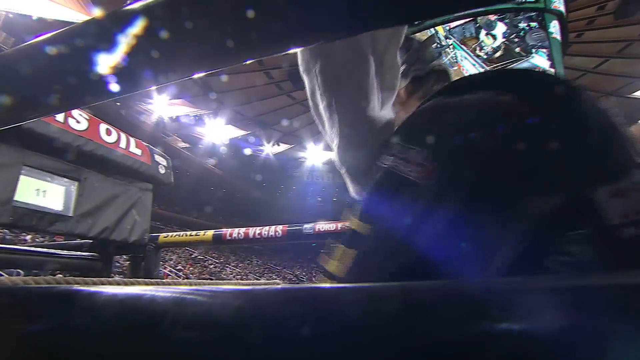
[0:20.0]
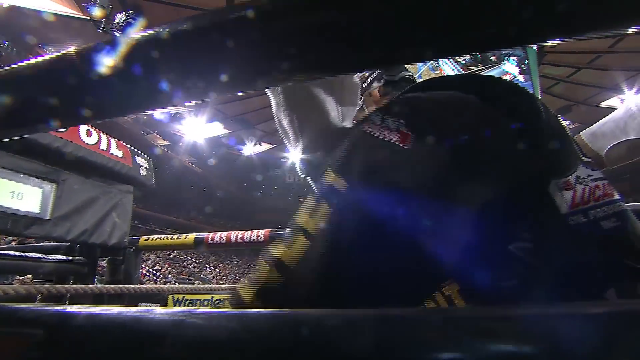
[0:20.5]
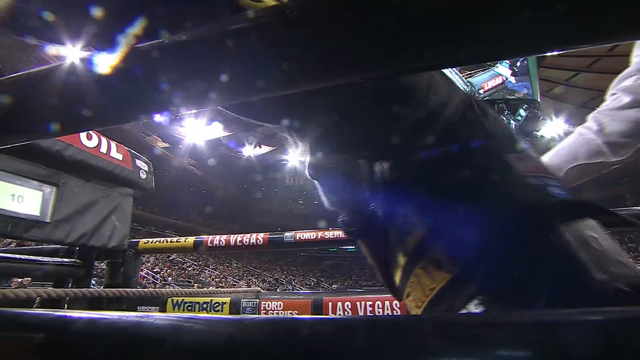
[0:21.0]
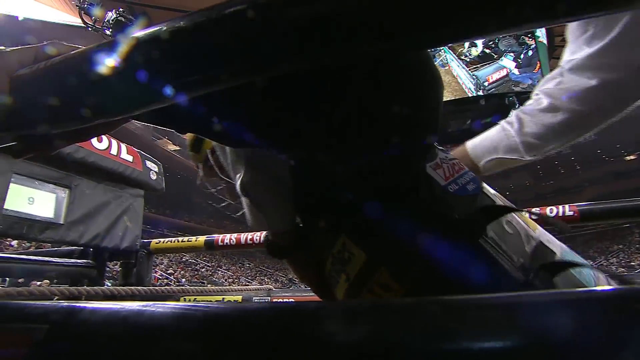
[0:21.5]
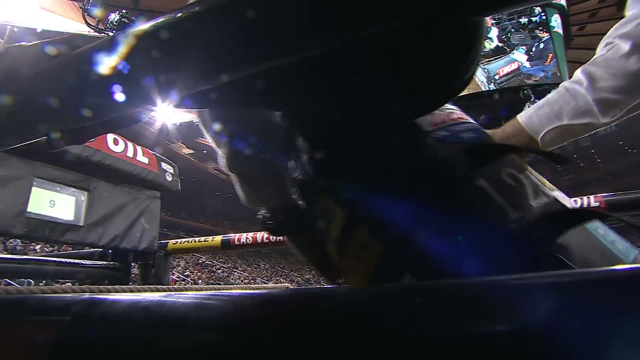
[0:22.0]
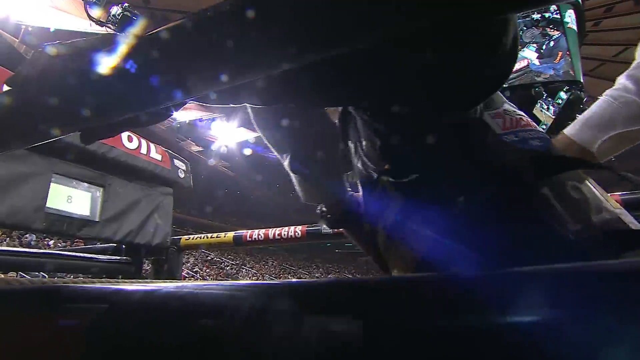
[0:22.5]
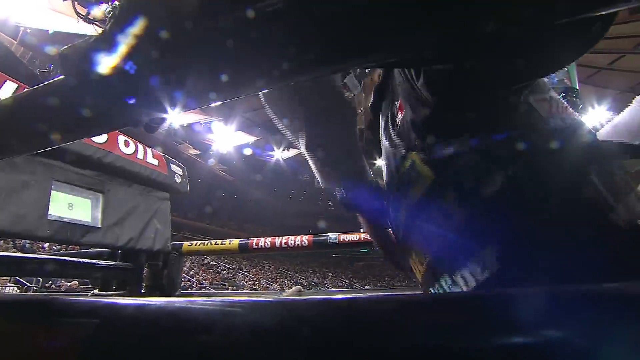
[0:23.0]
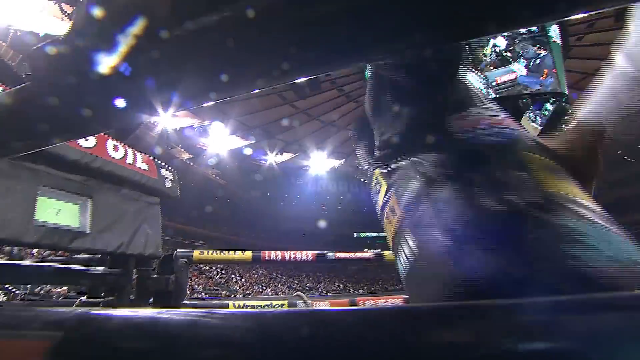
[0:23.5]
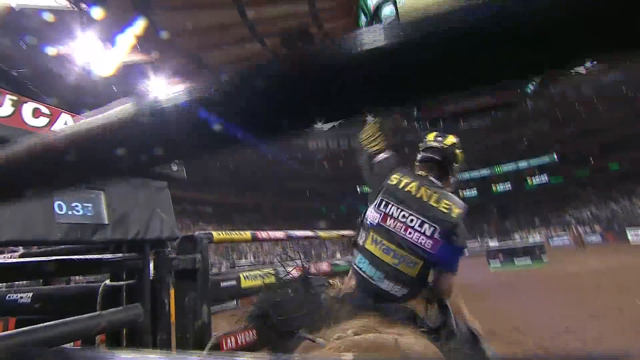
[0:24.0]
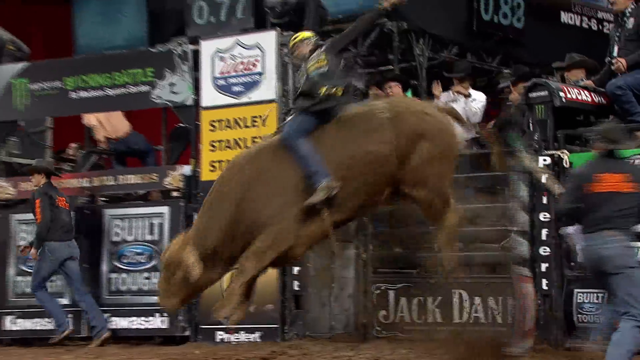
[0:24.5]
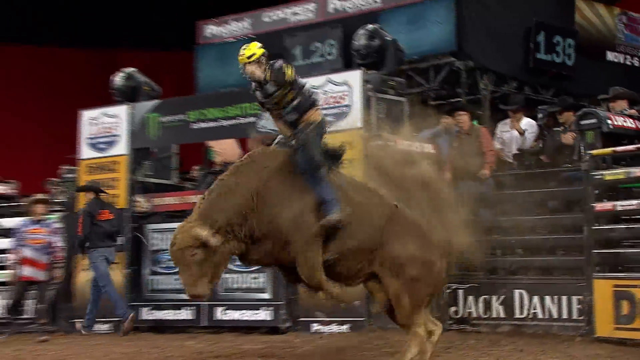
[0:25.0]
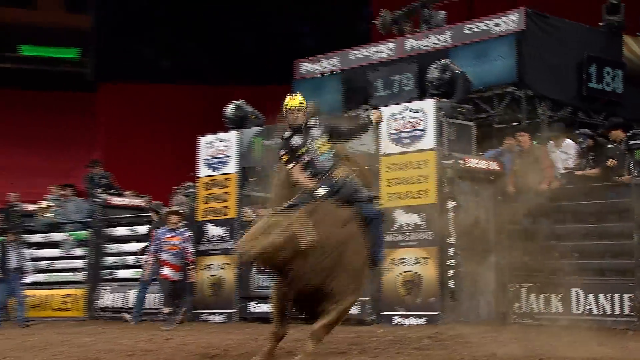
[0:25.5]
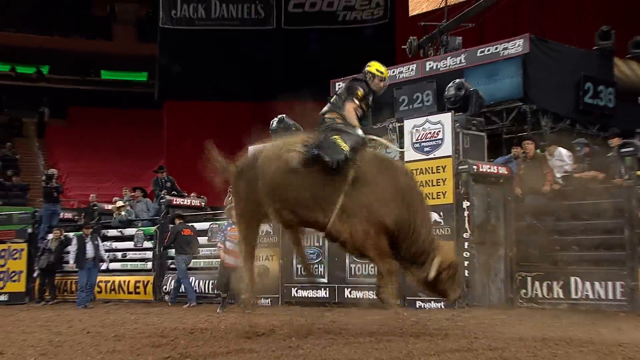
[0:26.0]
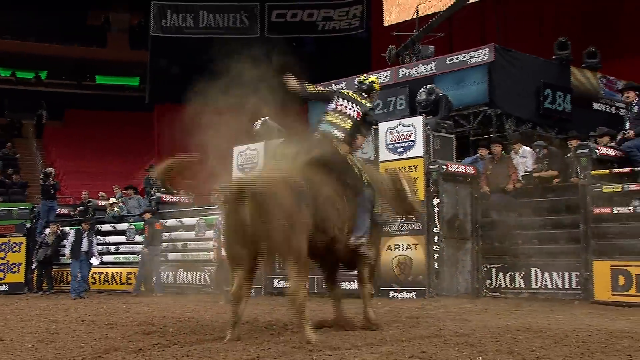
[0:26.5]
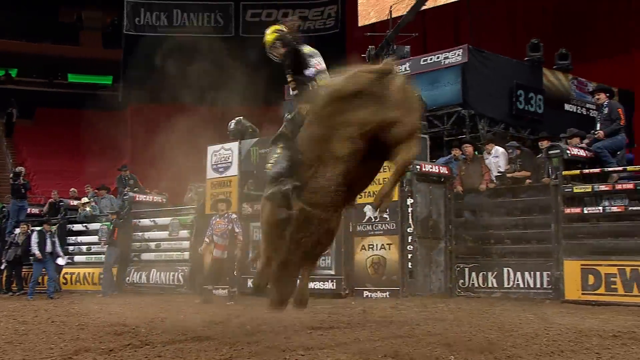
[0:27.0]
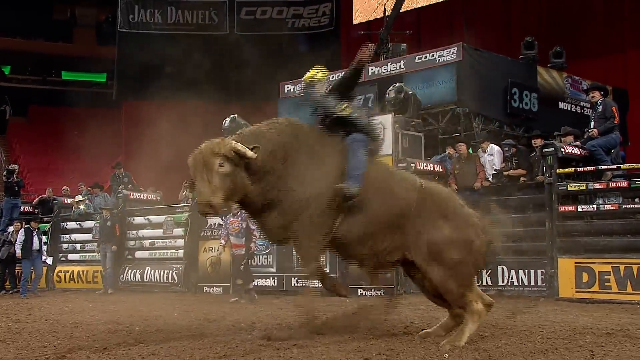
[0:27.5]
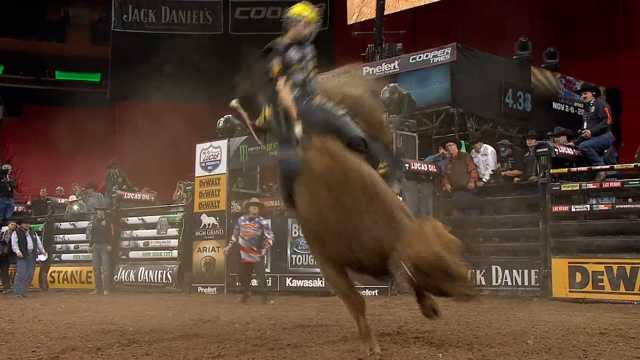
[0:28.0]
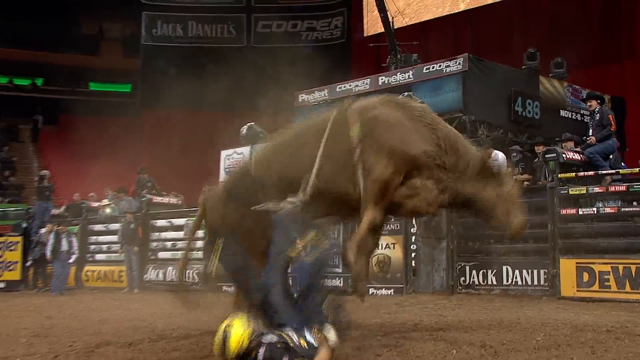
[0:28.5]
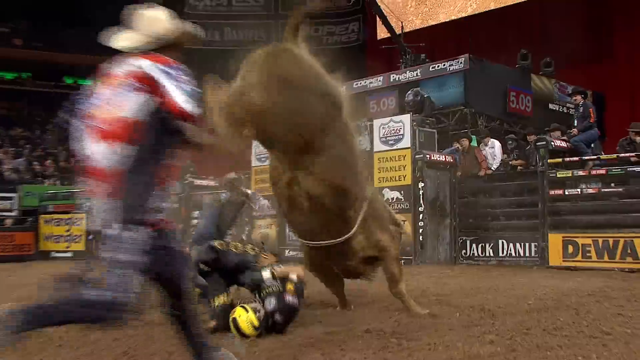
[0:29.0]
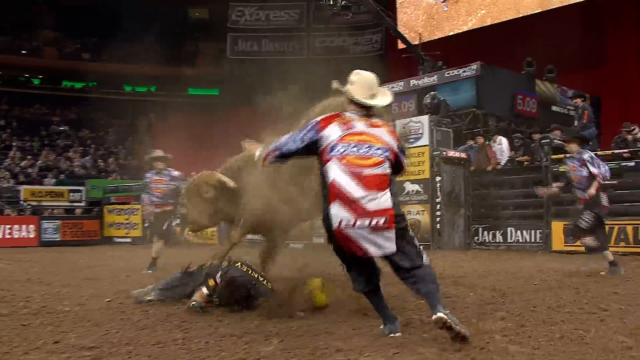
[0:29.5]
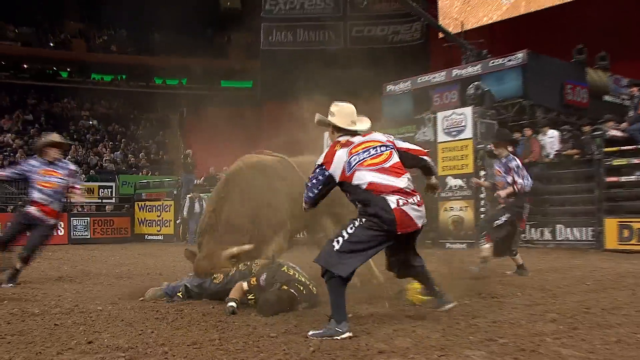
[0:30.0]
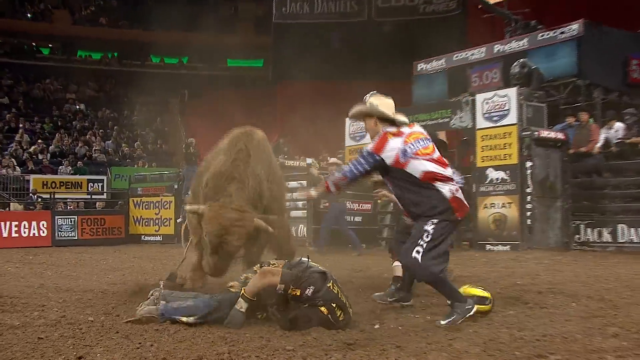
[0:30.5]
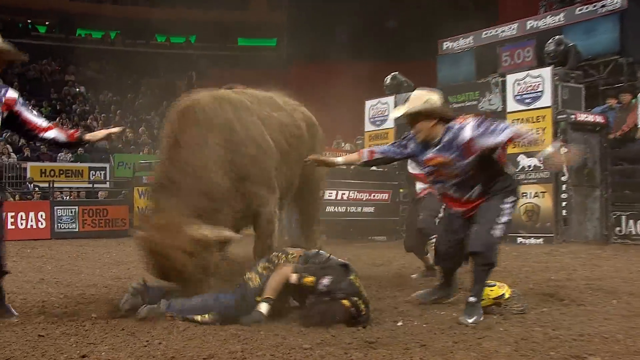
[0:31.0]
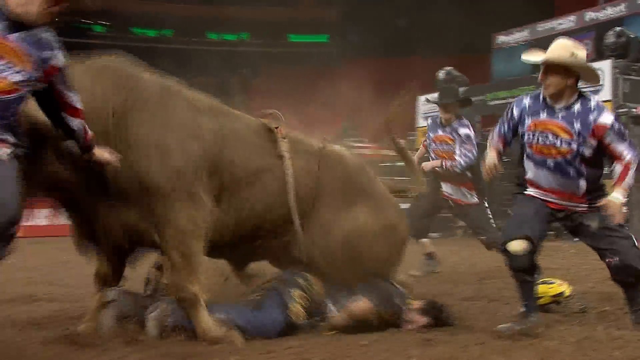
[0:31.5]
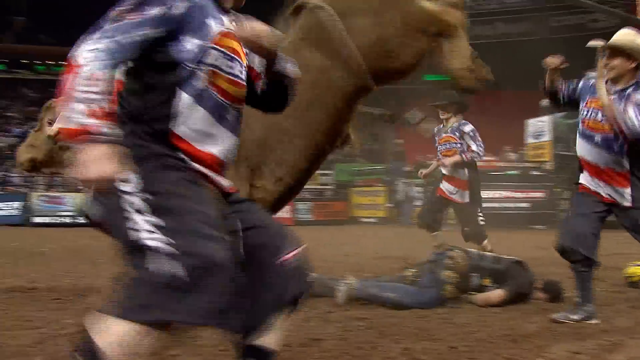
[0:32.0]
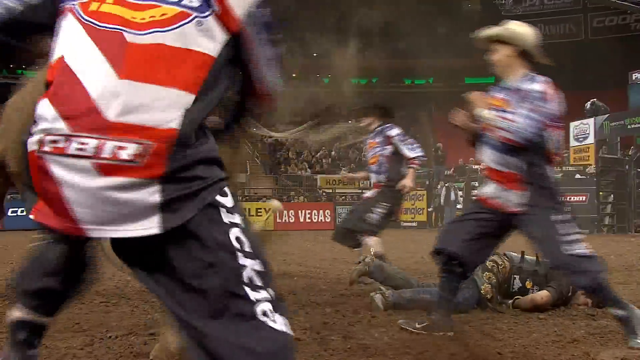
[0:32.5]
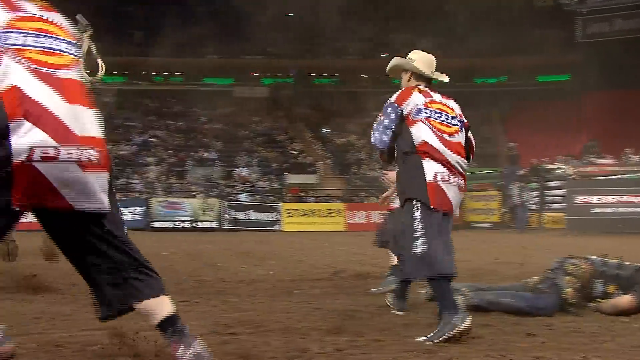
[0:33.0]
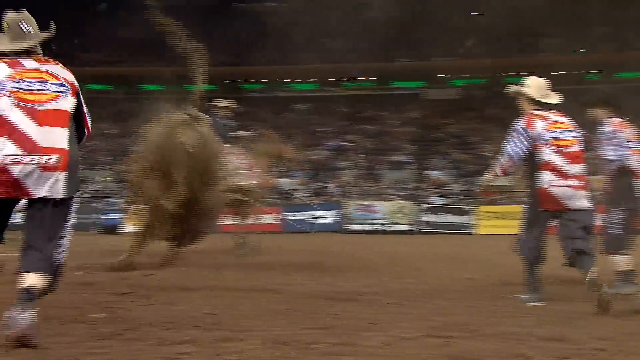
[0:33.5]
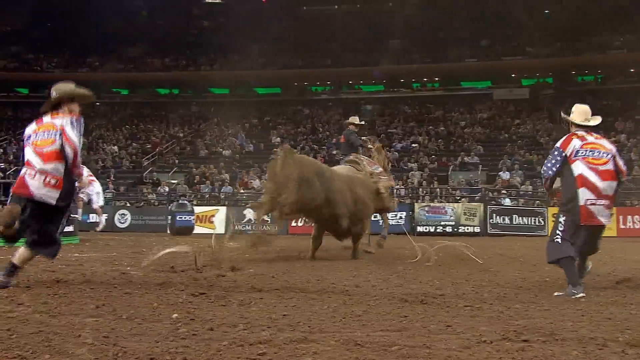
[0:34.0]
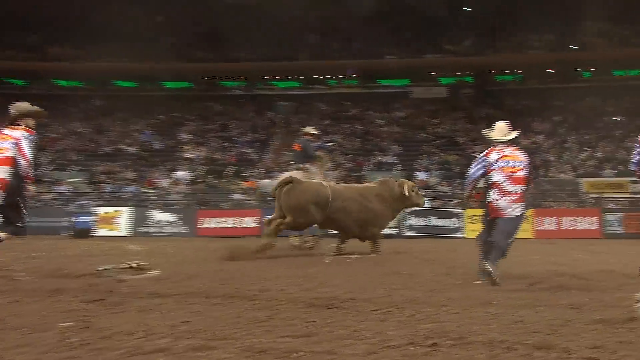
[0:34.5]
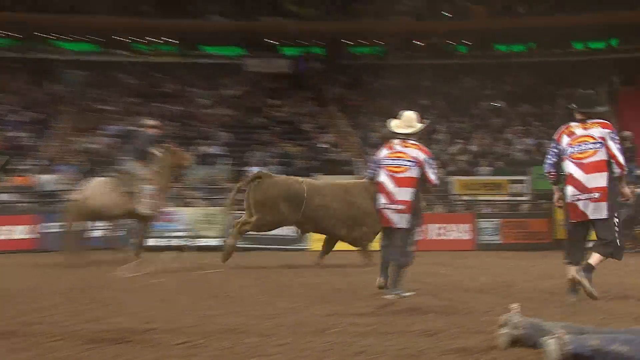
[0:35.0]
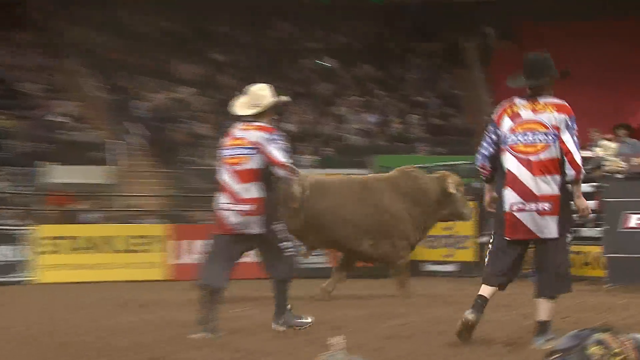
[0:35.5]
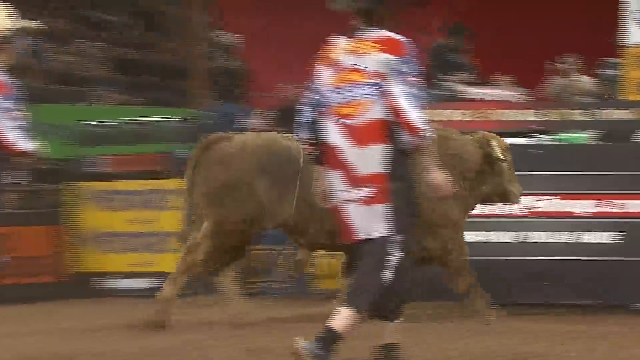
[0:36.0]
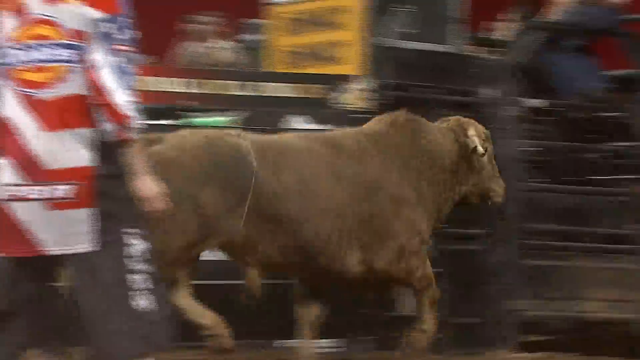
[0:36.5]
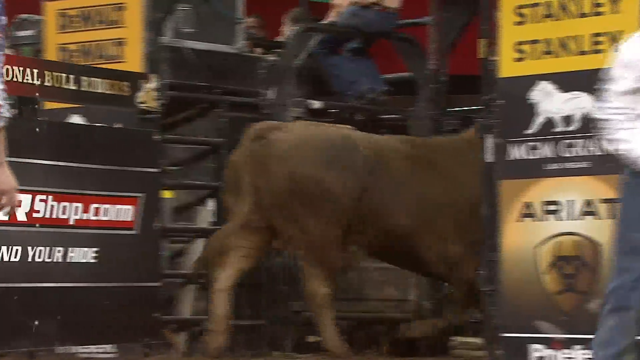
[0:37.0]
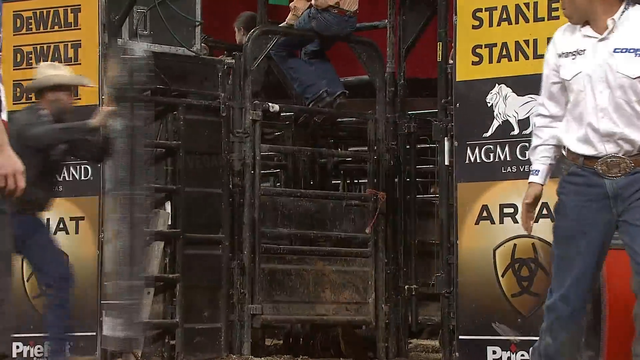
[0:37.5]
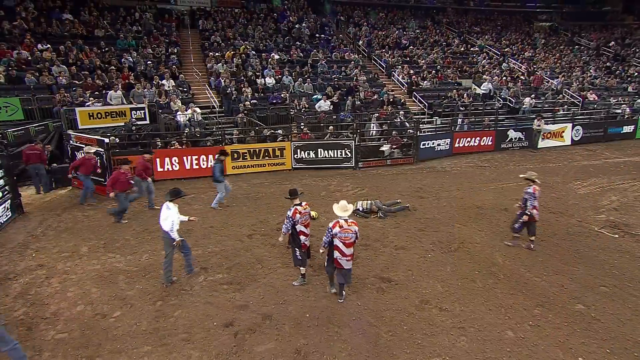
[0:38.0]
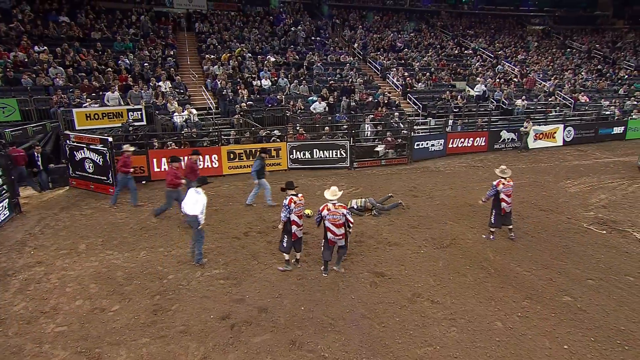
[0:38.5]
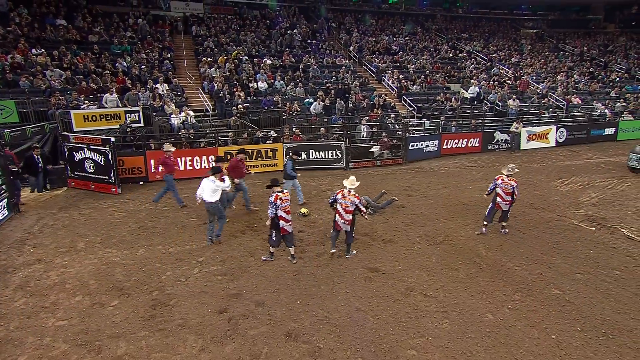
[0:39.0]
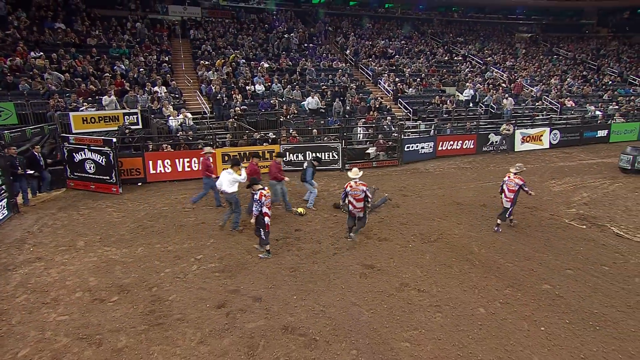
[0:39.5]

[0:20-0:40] The bull is released from the pen and begins thrashing wildly, trying to get the rider off. The man falls very quickly after the release; a timer shown in the background indicates he rode for approximately 5 seconds. Once he falls, three men quickly run out to handle the bull. They wear cowboy hats and white ponchos with red zigzagging stripes. They try to lead the bull back into the pen and eventually succeed in corralling it. The bull is released from the pen. The scene then transitions to a bird's-eye view of the stadium, with numerous advertisements for various products and businesses lining the stands.